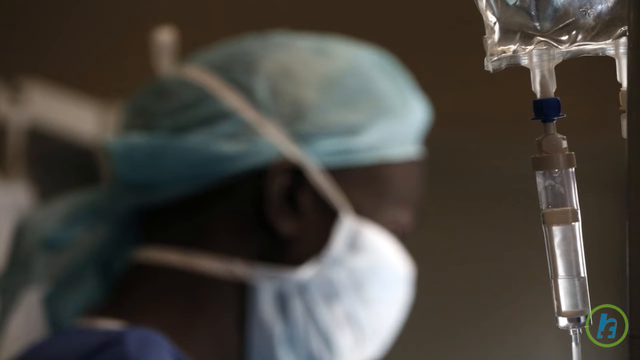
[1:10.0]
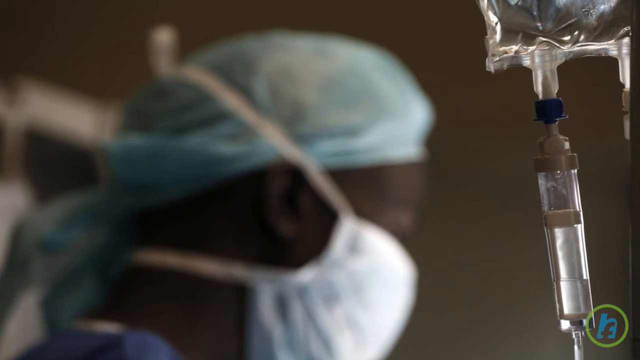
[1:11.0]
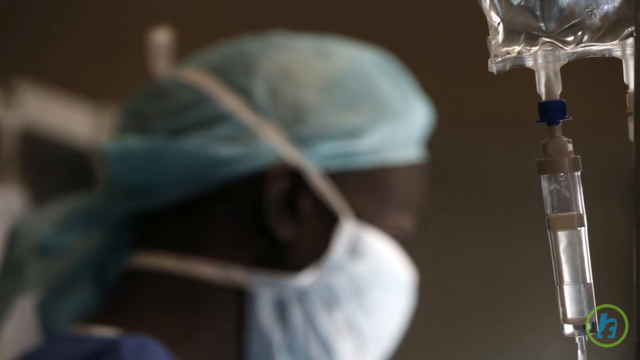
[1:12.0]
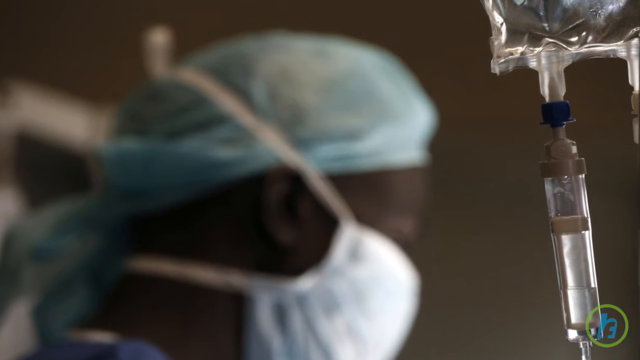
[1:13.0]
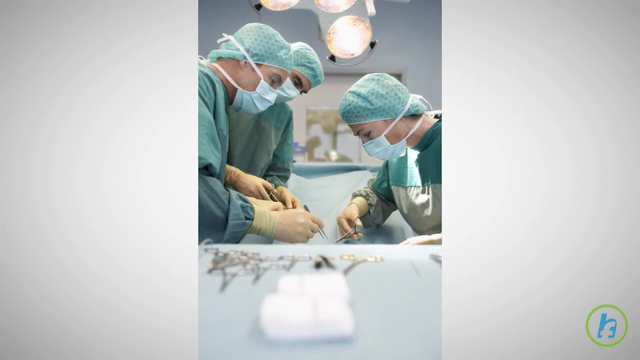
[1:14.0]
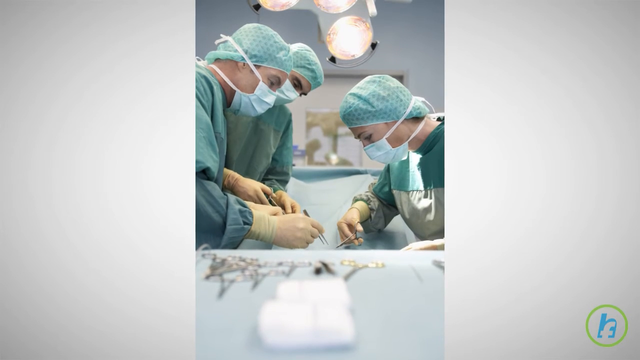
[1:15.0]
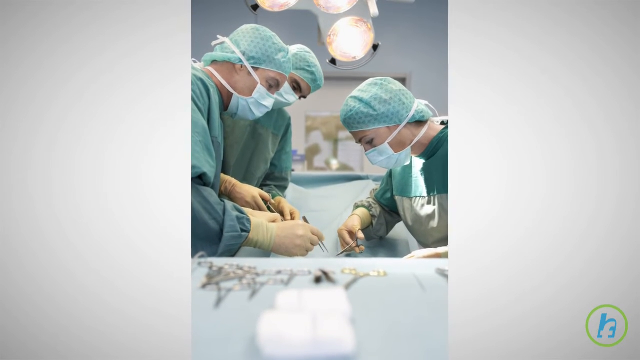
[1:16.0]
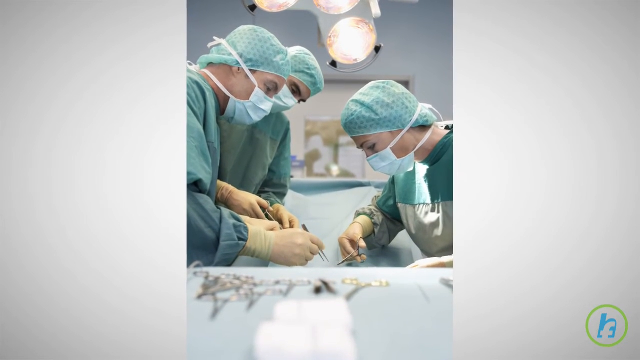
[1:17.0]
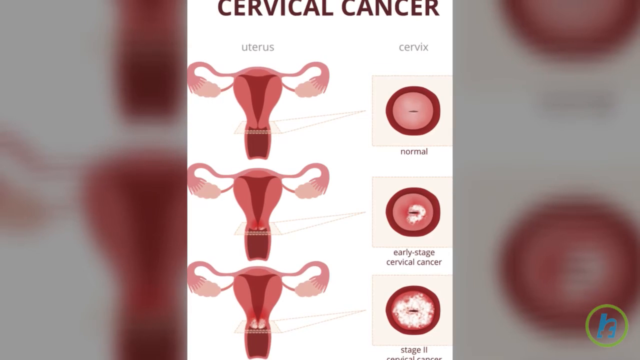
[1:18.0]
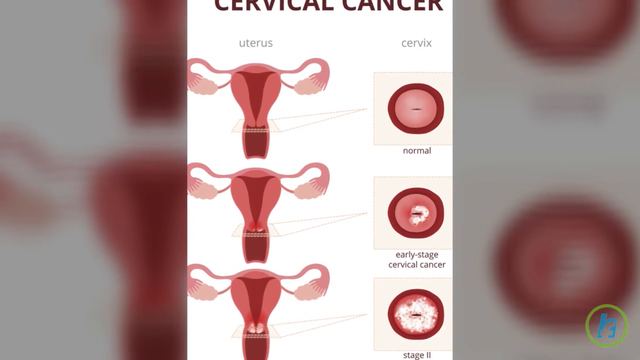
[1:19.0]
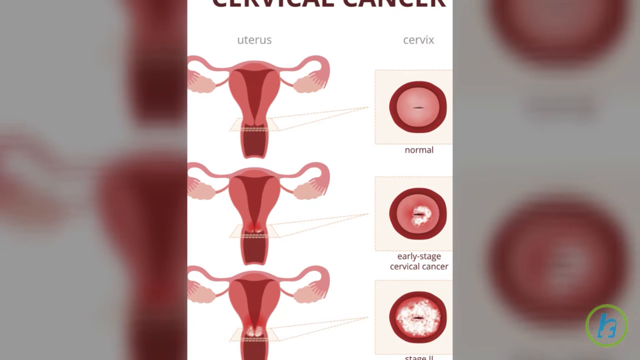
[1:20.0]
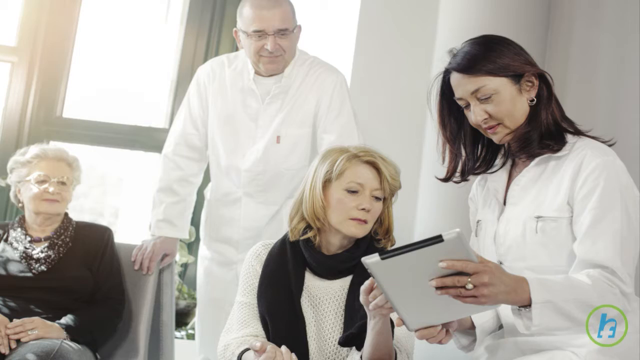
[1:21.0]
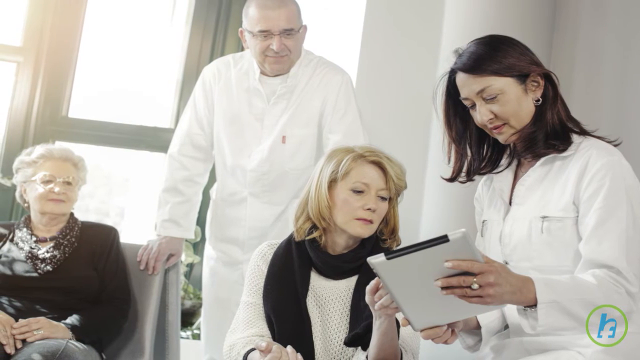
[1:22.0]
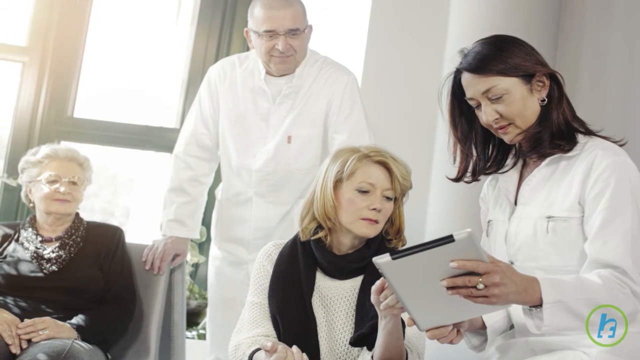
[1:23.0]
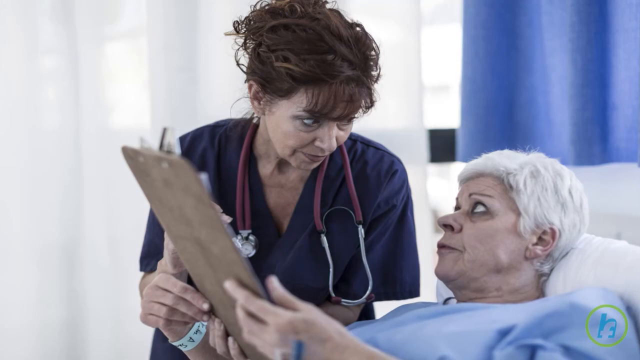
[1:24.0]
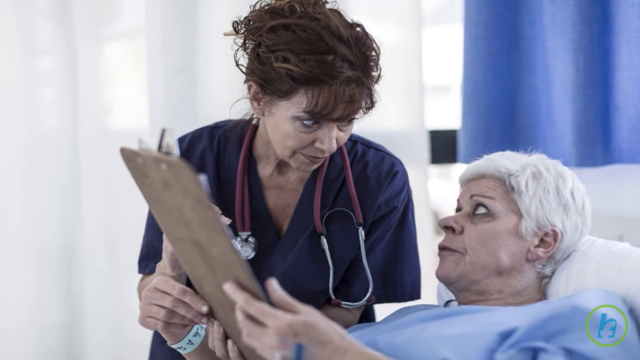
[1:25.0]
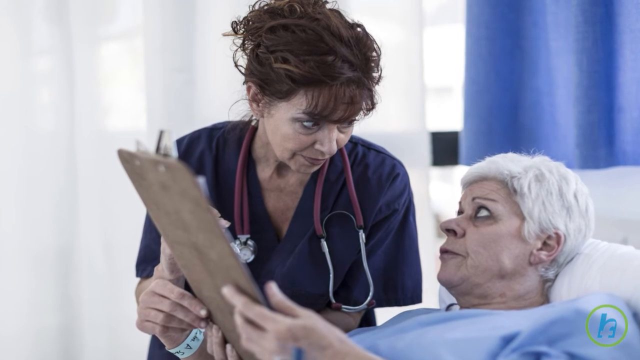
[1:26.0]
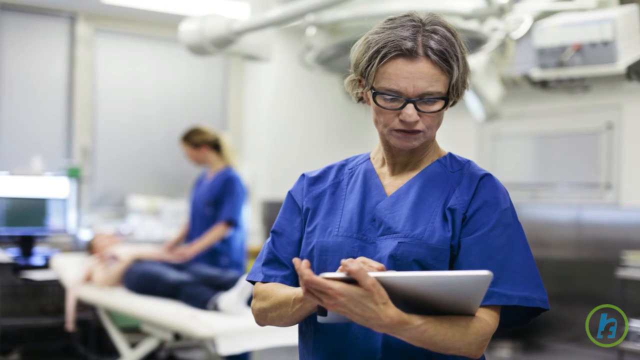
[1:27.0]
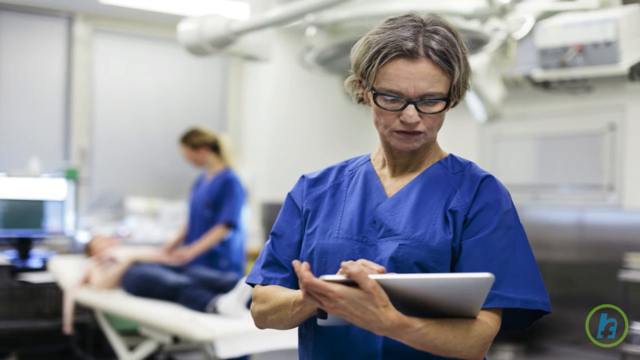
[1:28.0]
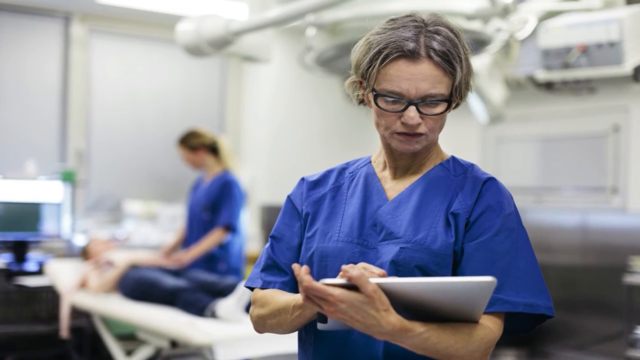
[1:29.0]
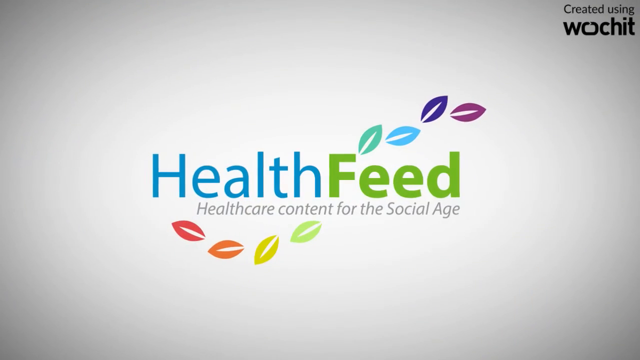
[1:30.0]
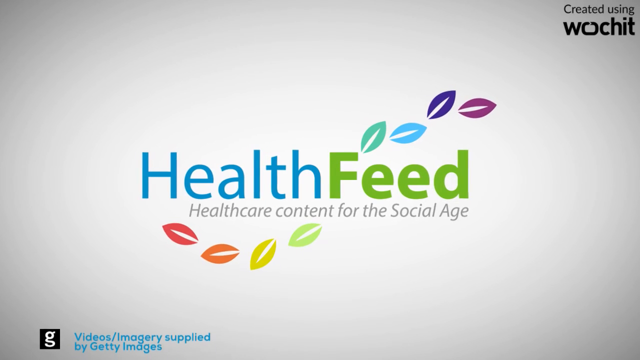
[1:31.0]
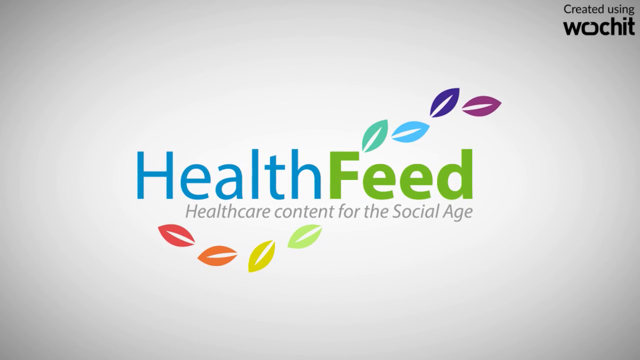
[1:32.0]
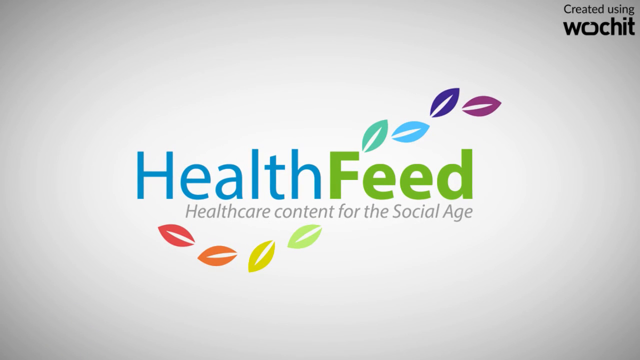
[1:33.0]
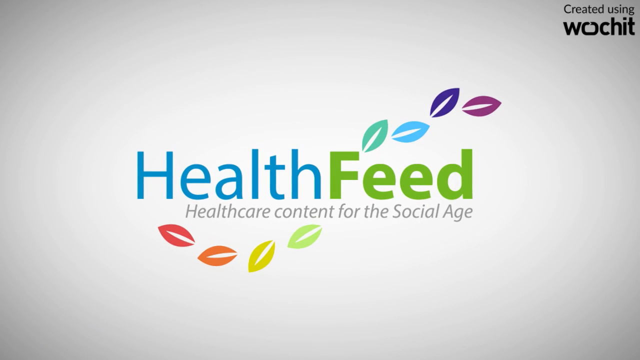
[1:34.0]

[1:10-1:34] Still images show nurses and doctors working on people. First is a very blurry image of a worker in a light blue cap and a light blue face mask covering their mouth and nose, working on something to their right; only the area from the chin to the top of the head is visible. The thing in focus seems to be a clear-colored dropper or sort of syringe on the right. Next, three doctors work on someone, one on the right and two on the left. A picture then shows what cervical cancer looks like in this part of the body, going through different stages. After that come pictures of doctors talking to patients, and then another doctor looking at a tablet while somebody in the background takes care of another patient.